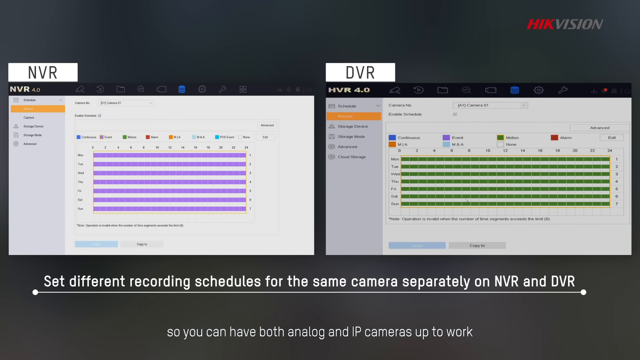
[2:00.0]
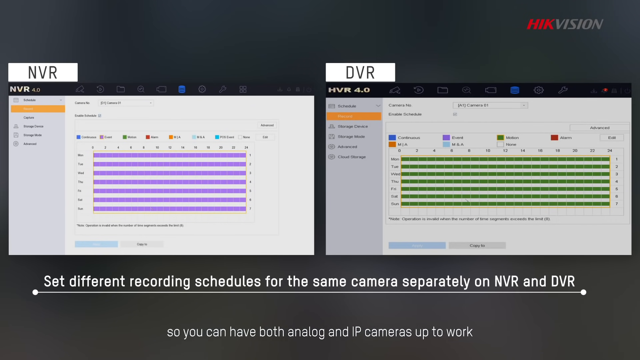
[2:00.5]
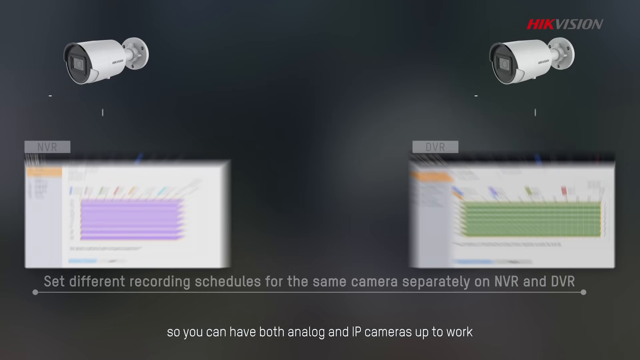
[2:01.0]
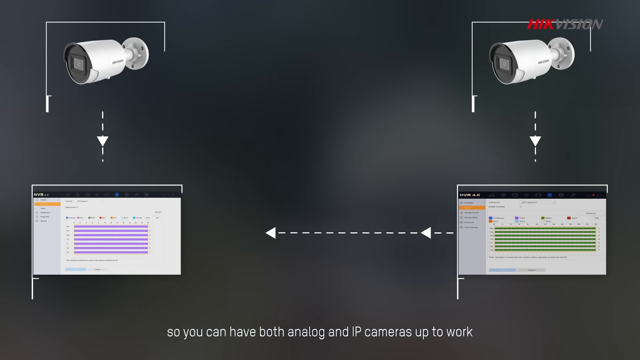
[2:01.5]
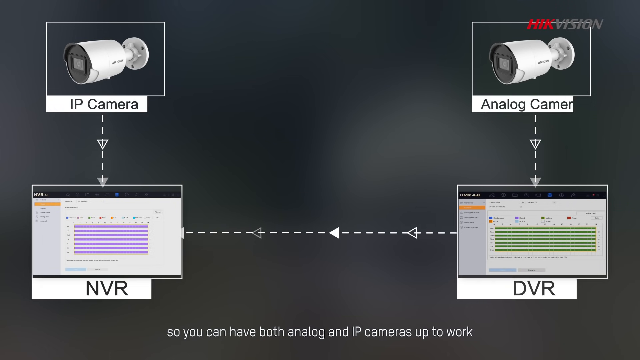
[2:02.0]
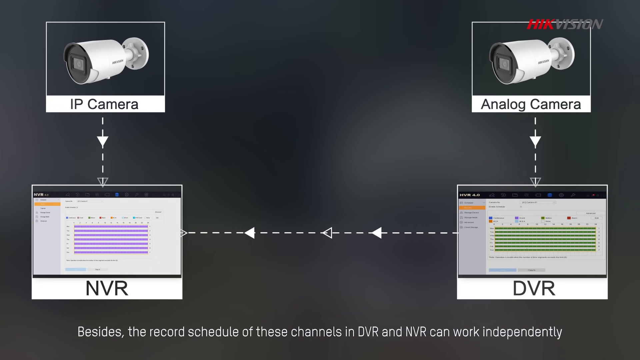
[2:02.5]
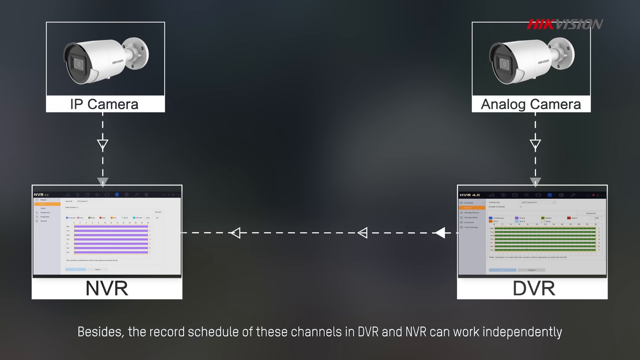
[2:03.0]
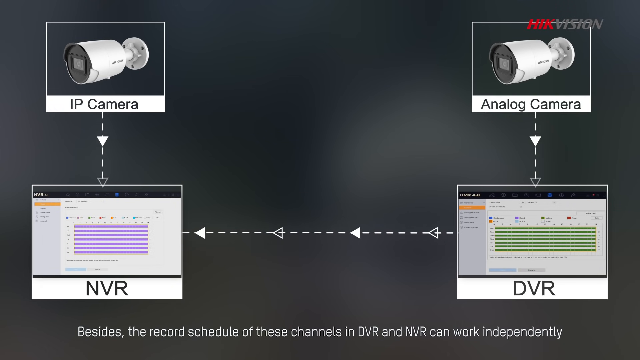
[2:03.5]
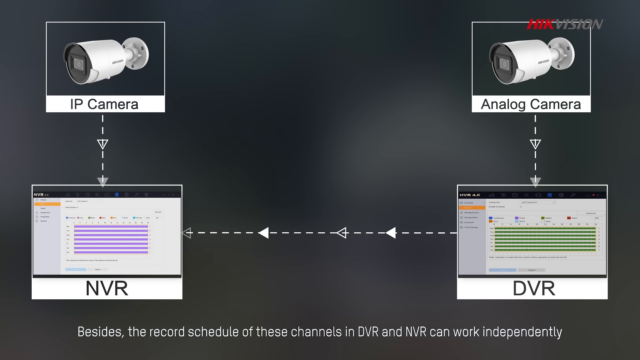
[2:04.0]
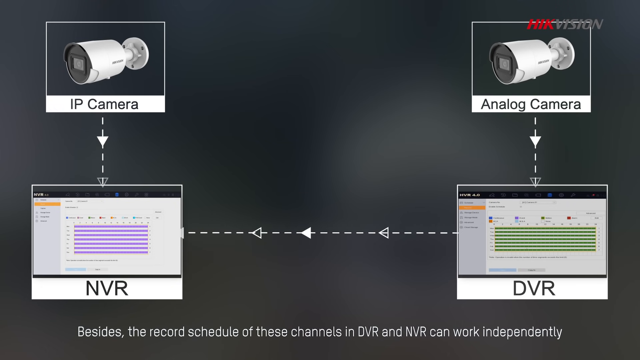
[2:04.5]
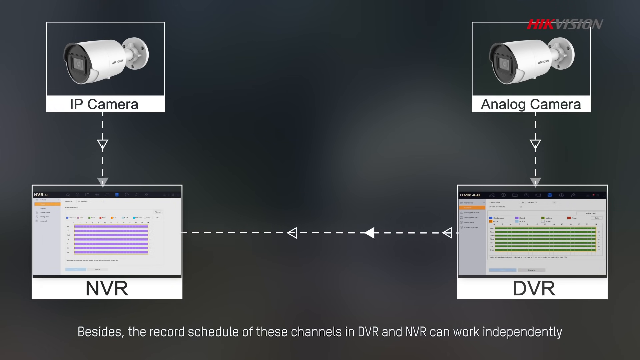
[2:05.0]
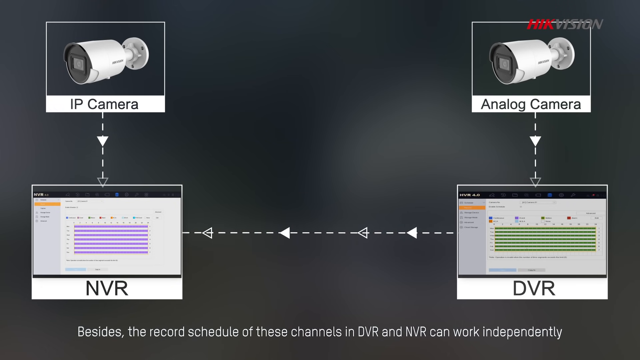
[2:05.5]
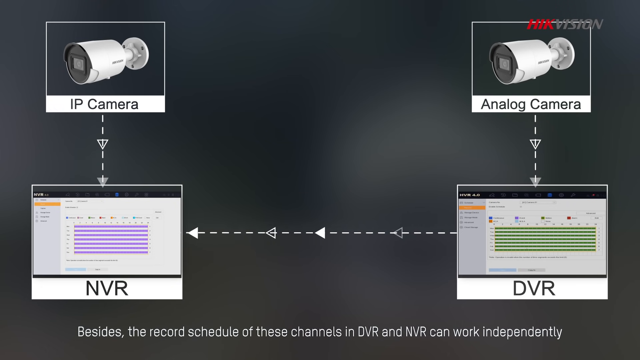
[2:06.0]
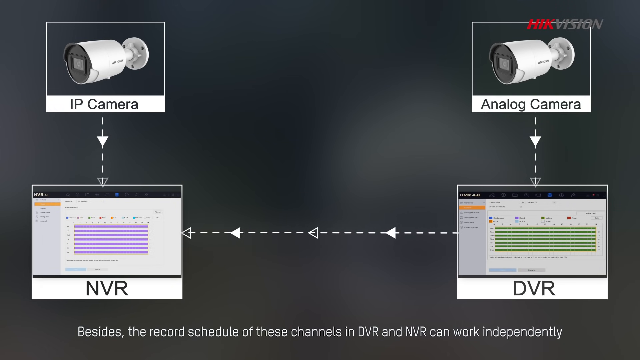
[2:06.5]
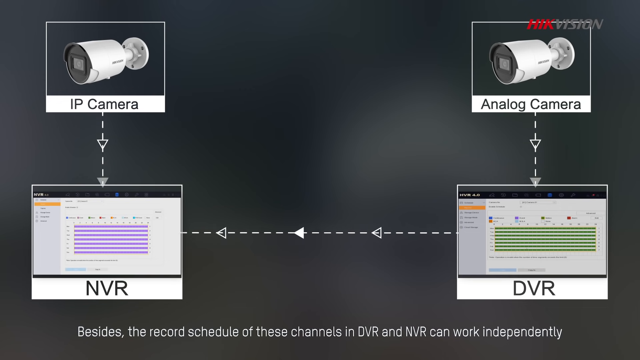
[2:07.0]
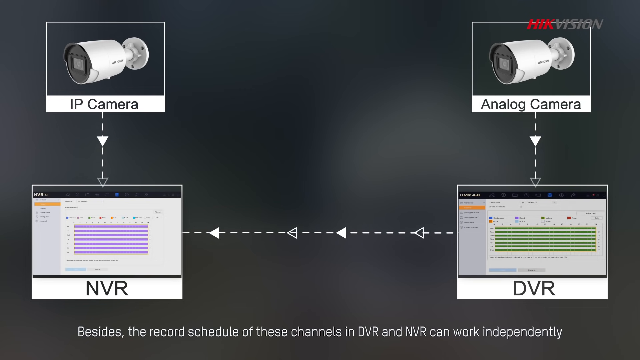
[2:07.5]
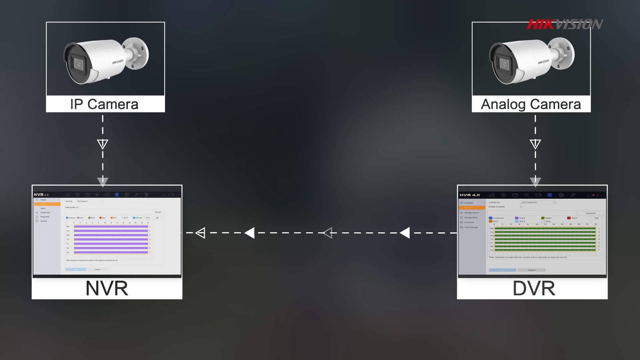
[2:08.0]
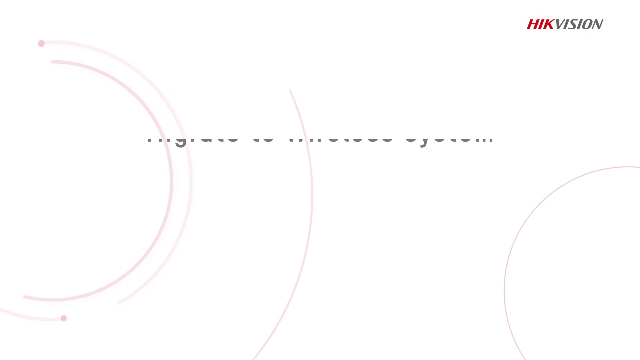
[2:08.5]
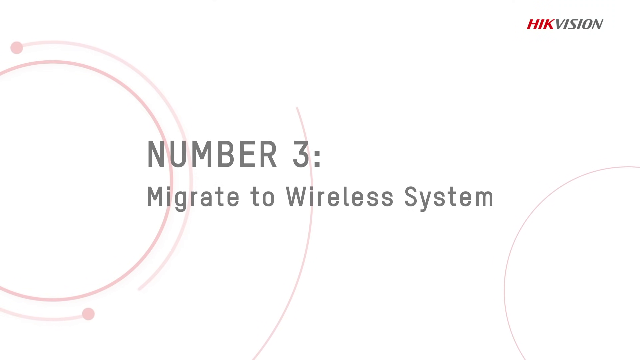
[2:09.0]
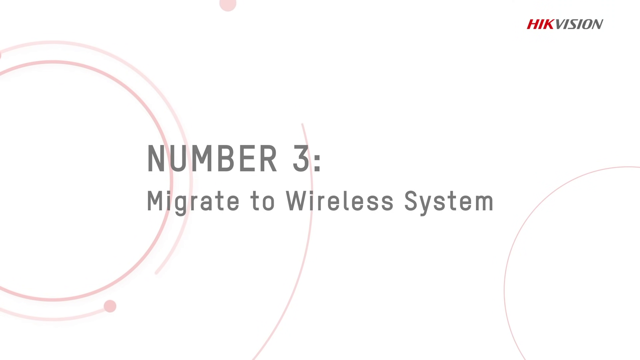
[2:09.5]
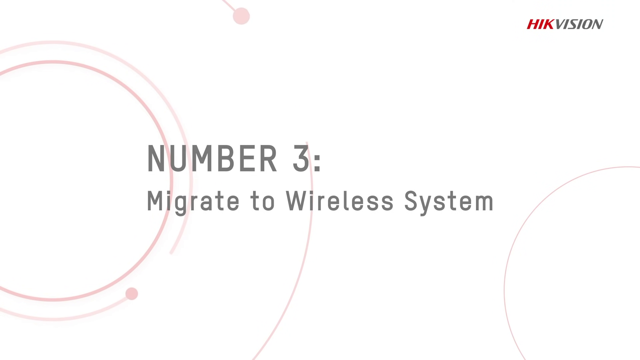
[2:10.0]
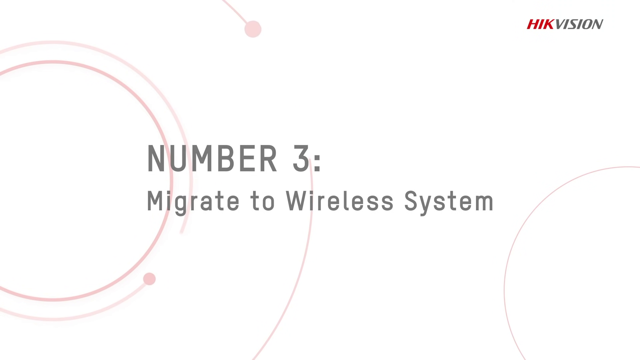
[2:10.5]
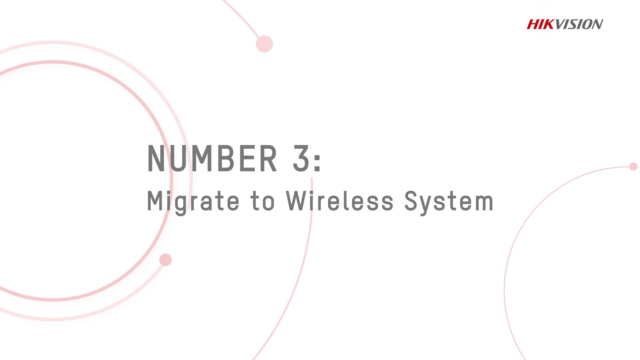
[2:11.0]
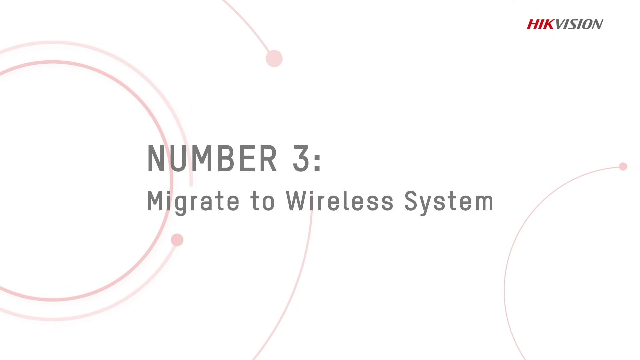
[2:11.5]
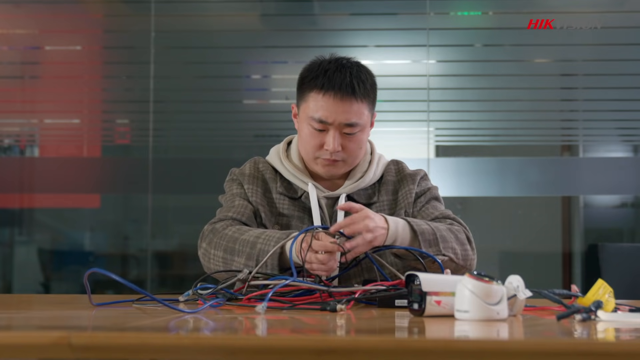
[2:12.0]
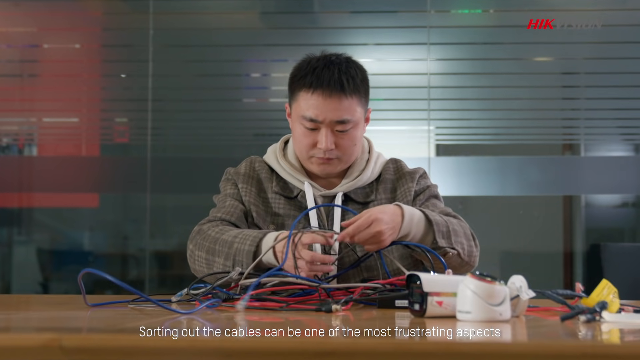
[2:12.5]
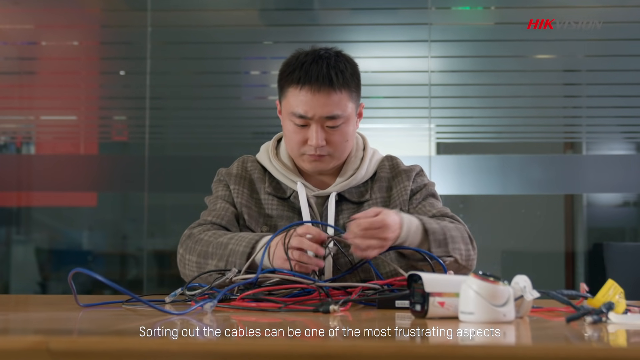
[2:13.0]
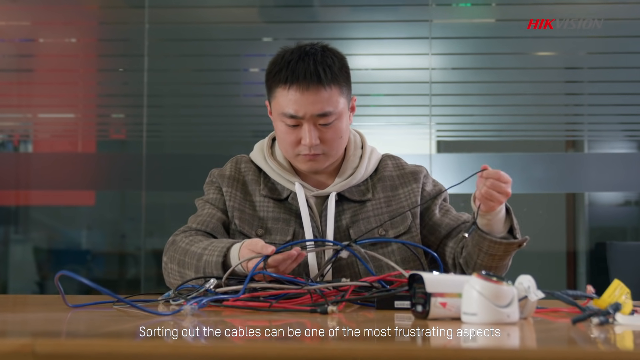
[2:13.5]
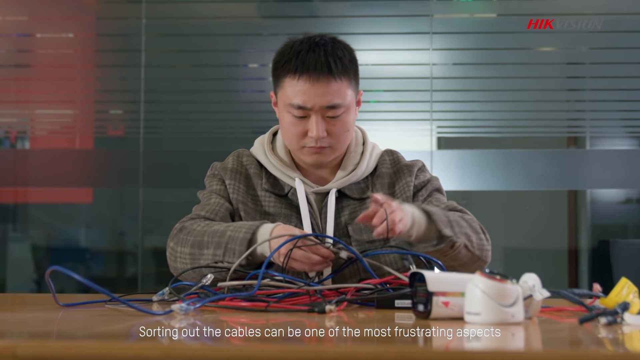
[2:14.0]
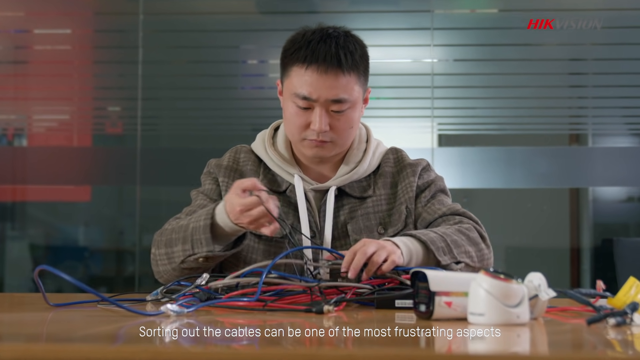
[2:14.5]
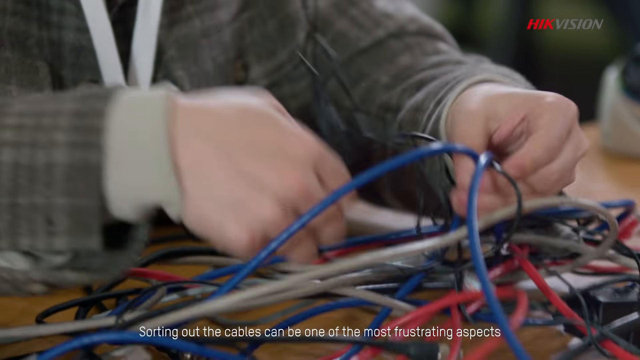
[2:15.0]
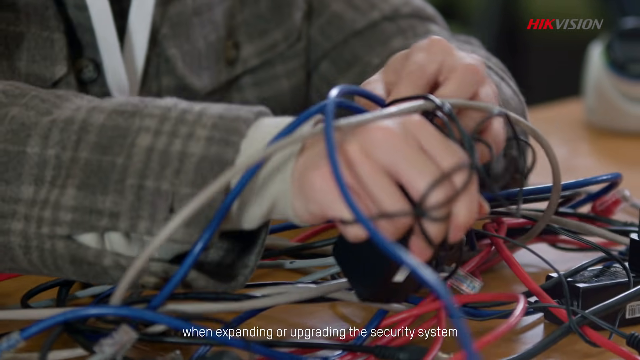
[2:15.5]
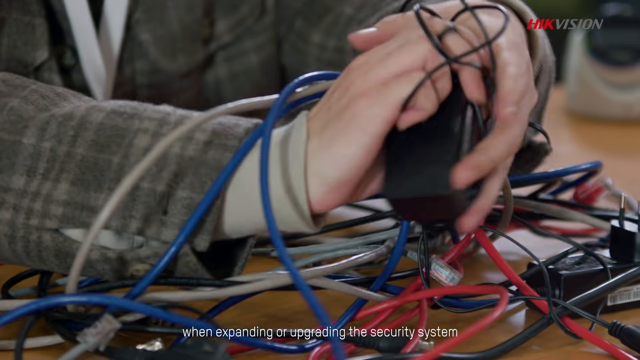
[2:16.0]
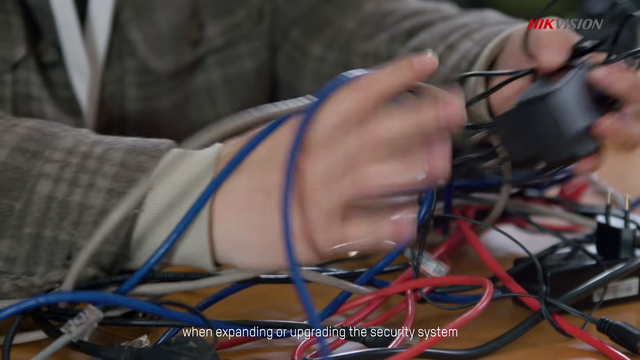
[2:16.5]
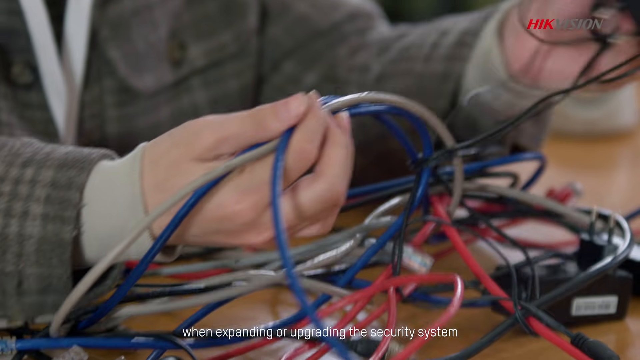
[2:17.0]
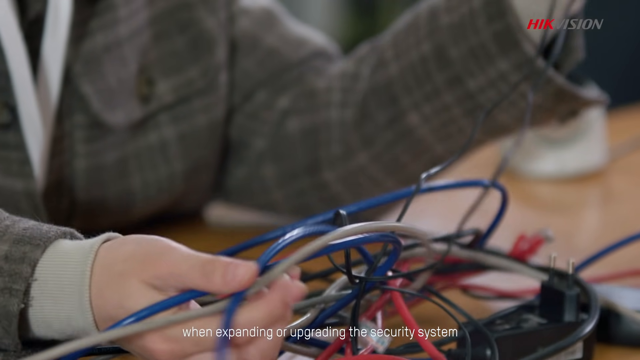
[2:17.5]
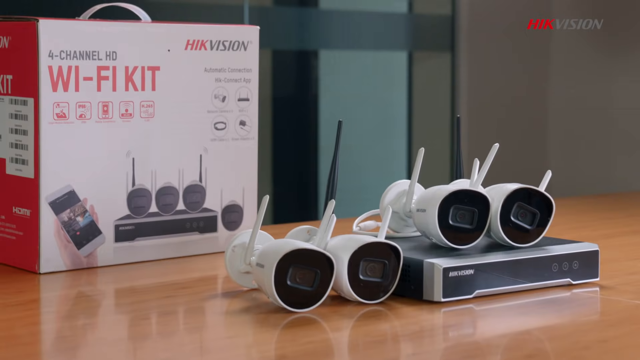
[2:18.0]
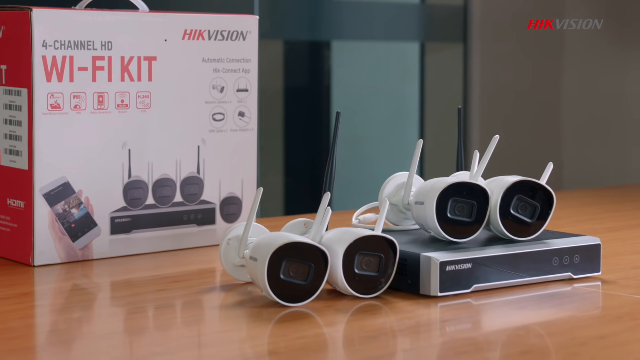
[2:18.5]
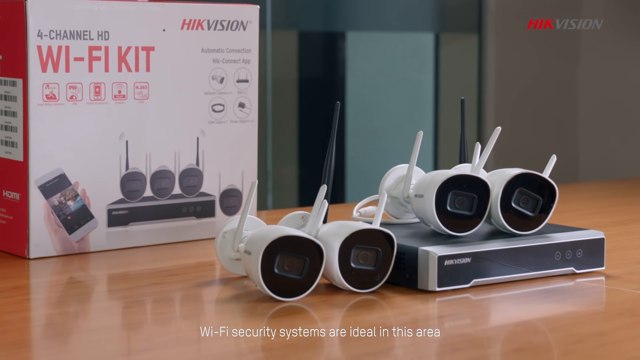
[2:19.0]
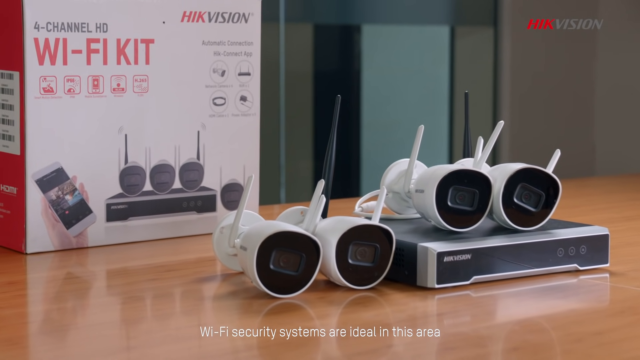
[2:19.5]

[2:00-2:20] A diagram shows the data flow: the analog camera feeds the DVR, which feeds the NVR, while the IP camera feeds the NVR directly, with arrows showing that the NVR receives from everything. Then the screen says "3. migrate to wireless system." The man in the gray, brown plaid jacket and hoodie holds a bunch of wires that look knotted and tries to untangle the cords. Then the Wi-Fi wireless camera kit is shown neatly laid out on the light brown wooden table, with the focus on the security unit.